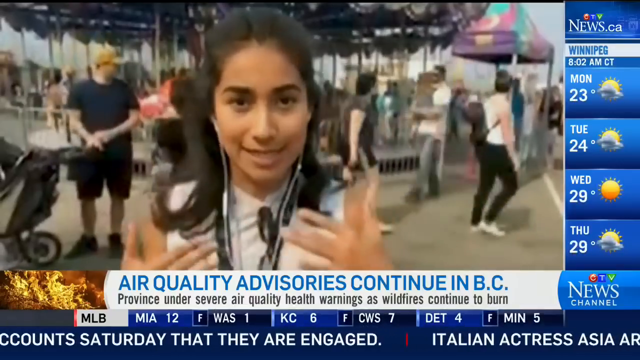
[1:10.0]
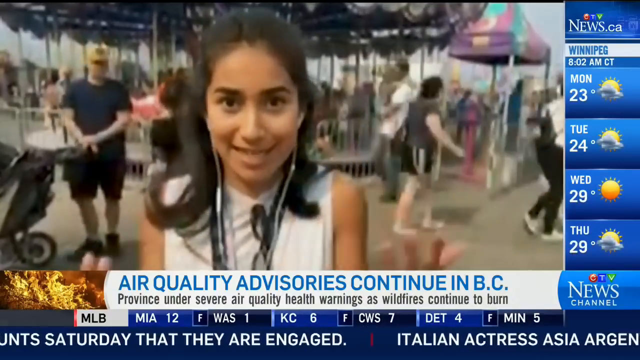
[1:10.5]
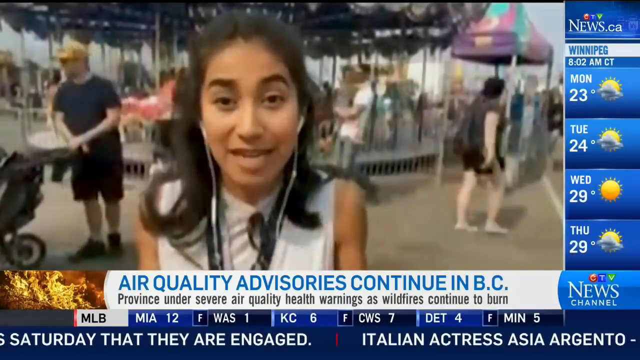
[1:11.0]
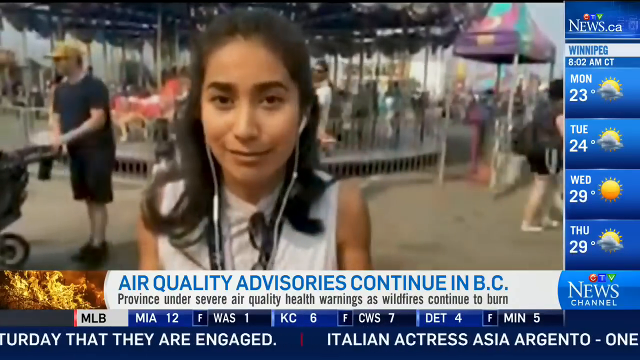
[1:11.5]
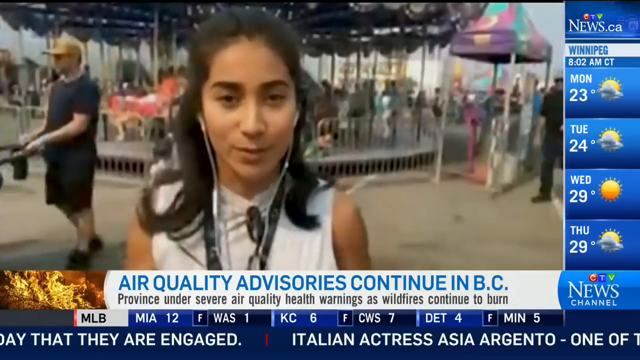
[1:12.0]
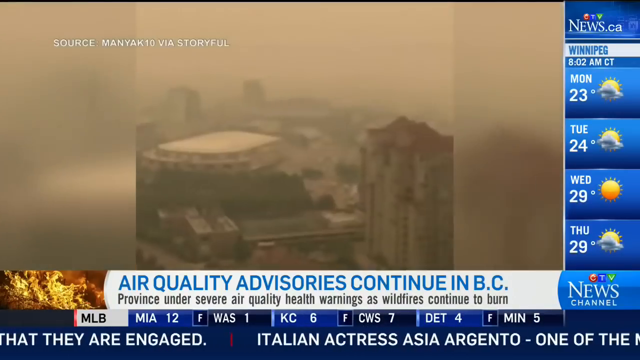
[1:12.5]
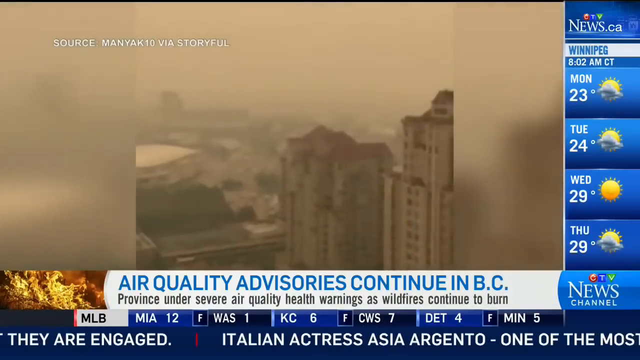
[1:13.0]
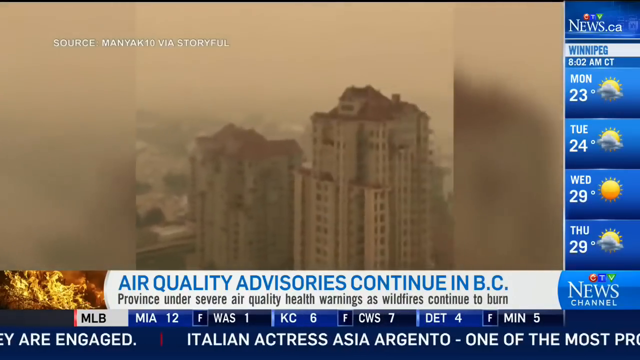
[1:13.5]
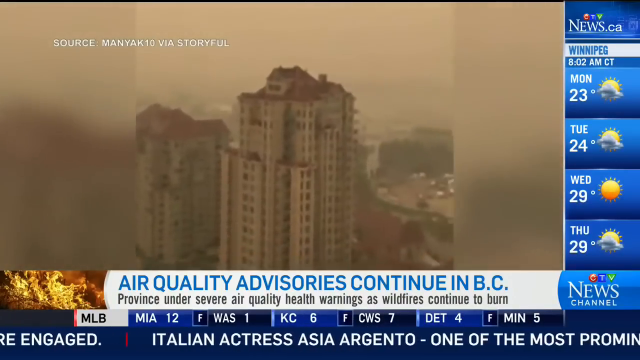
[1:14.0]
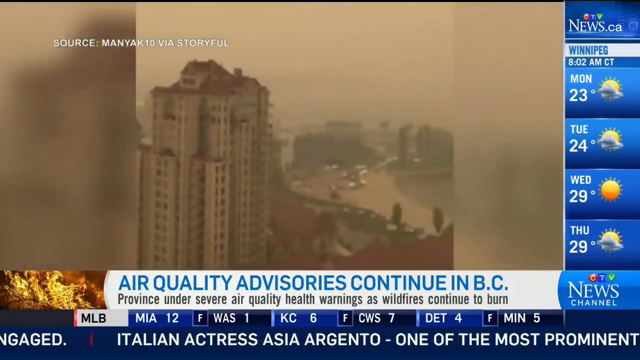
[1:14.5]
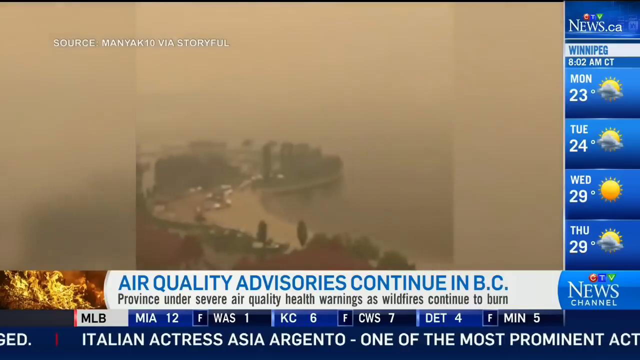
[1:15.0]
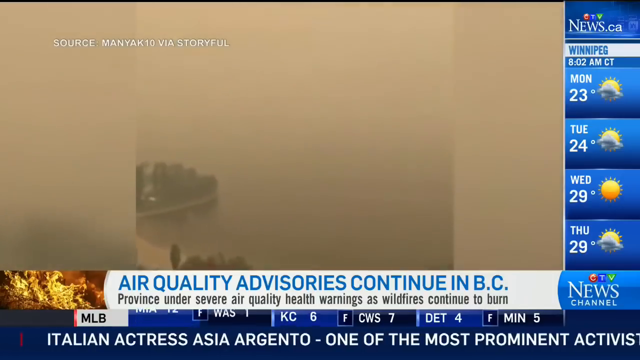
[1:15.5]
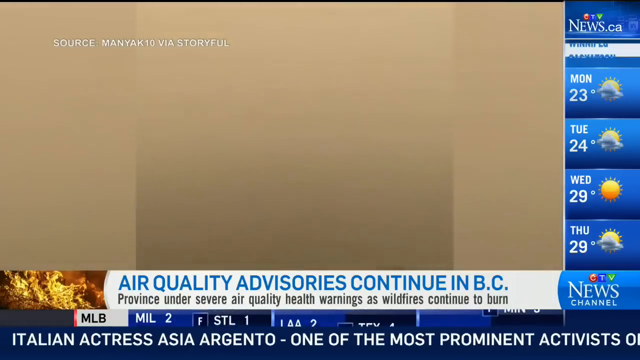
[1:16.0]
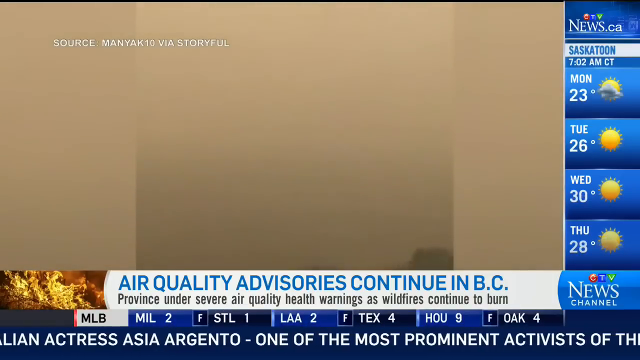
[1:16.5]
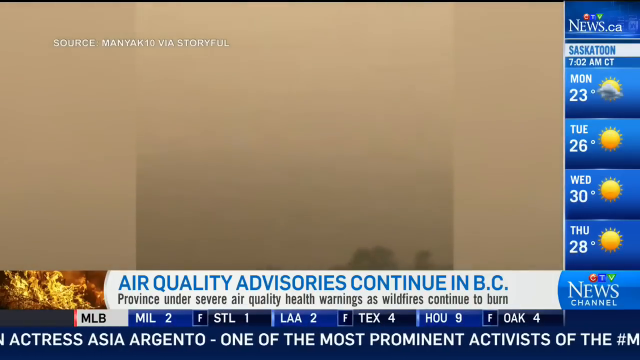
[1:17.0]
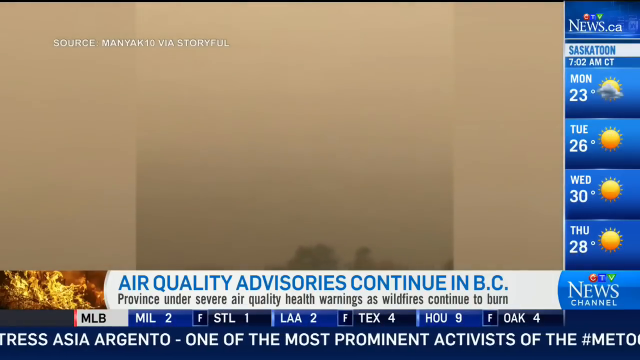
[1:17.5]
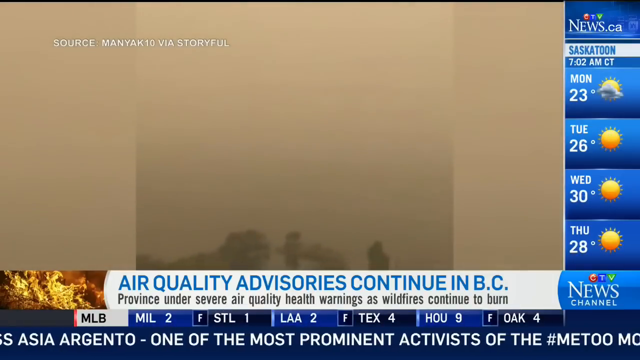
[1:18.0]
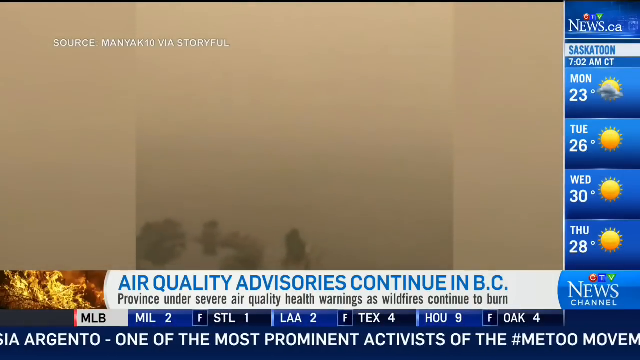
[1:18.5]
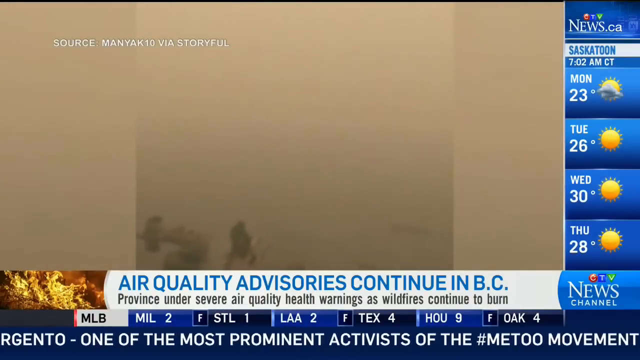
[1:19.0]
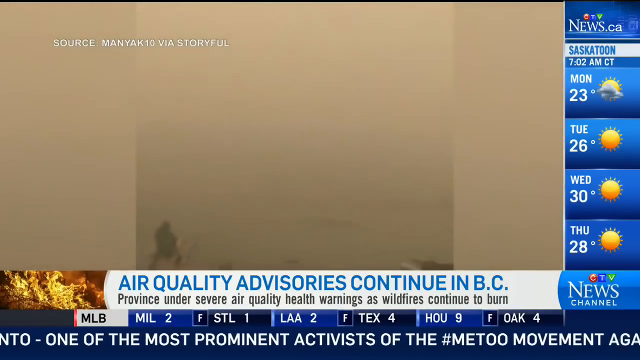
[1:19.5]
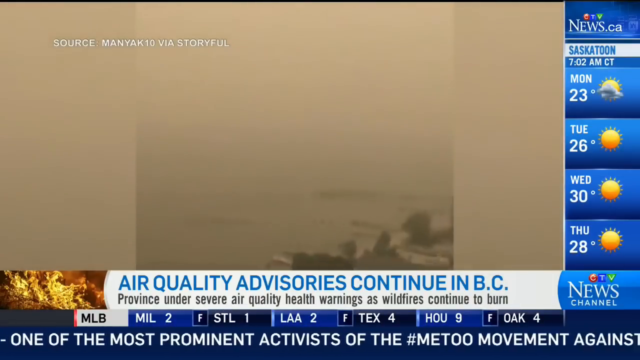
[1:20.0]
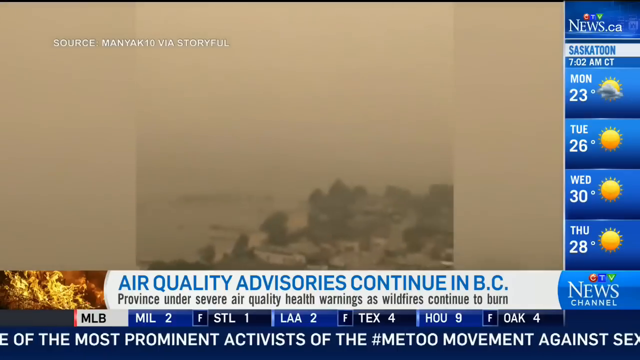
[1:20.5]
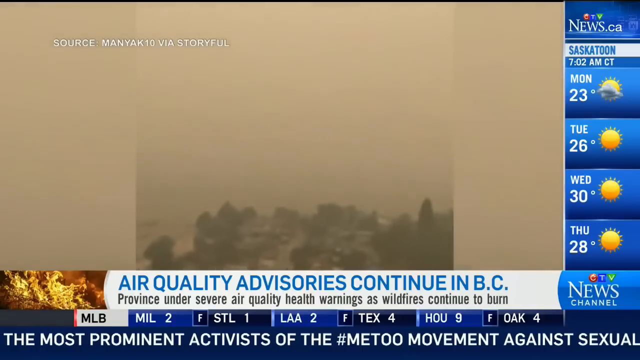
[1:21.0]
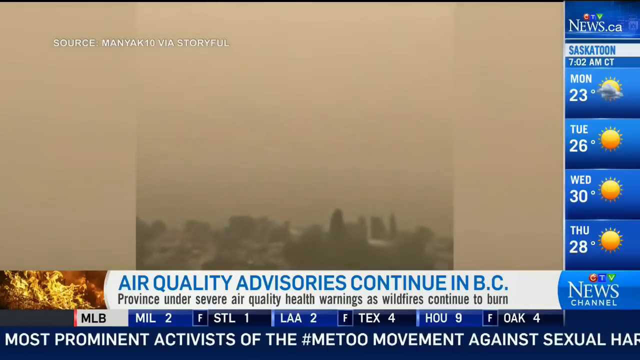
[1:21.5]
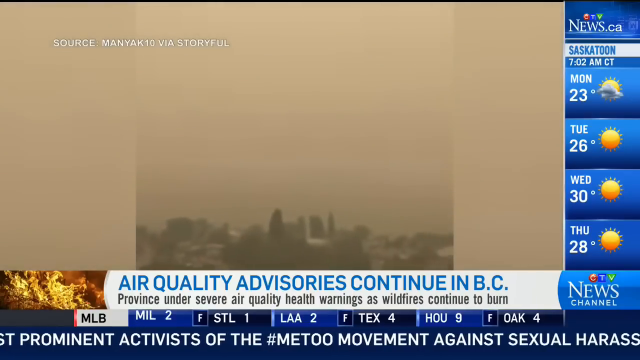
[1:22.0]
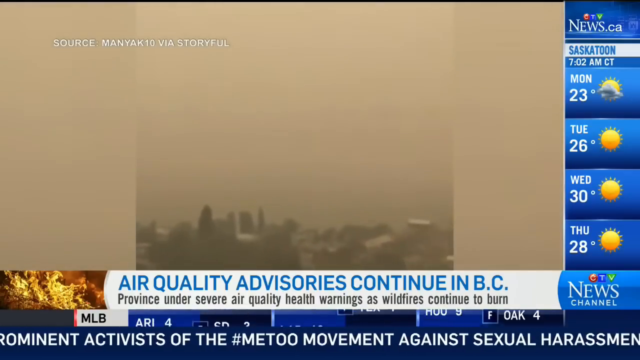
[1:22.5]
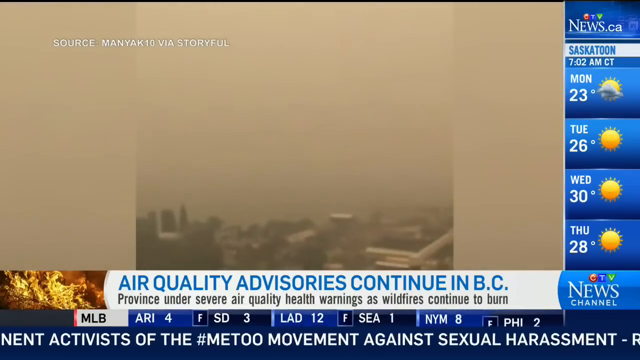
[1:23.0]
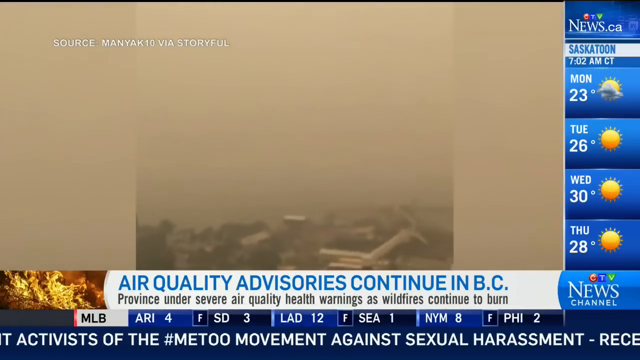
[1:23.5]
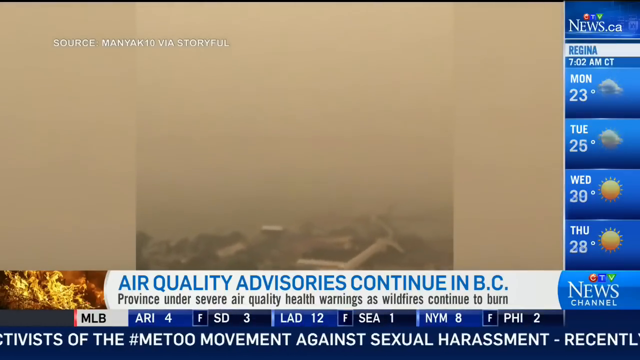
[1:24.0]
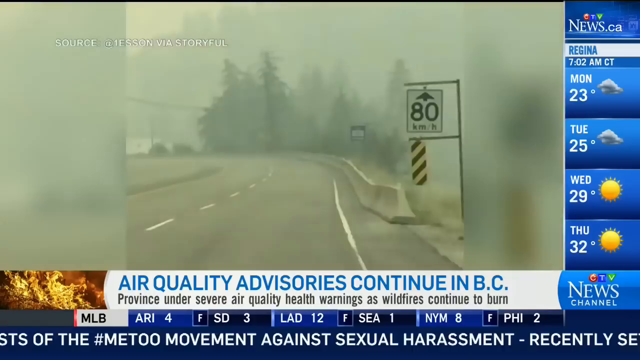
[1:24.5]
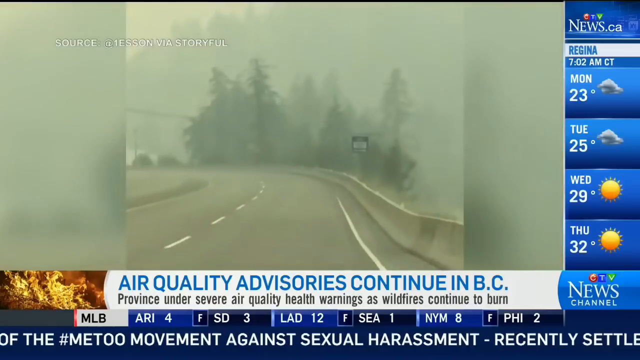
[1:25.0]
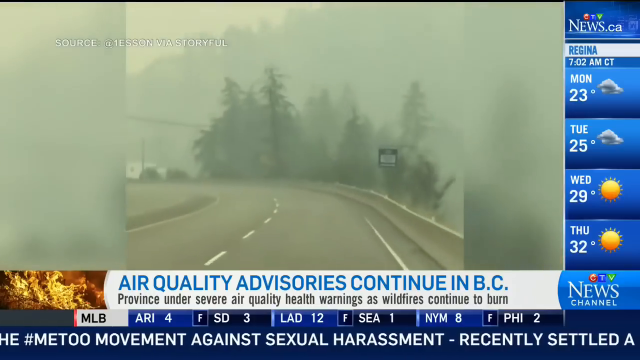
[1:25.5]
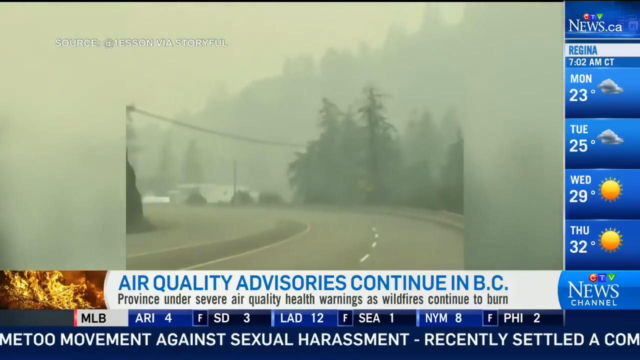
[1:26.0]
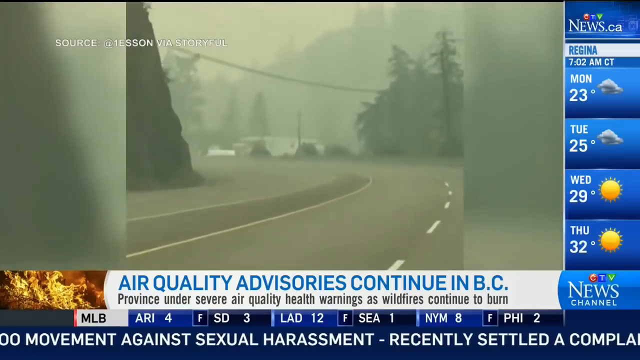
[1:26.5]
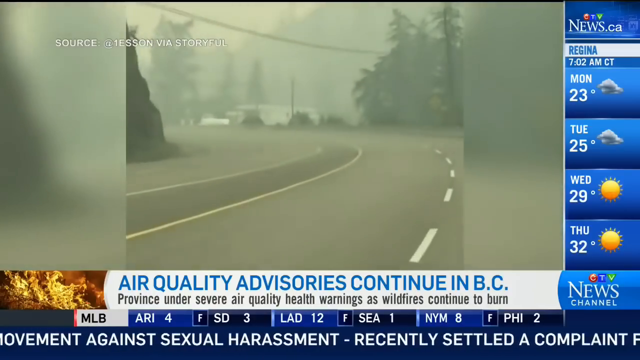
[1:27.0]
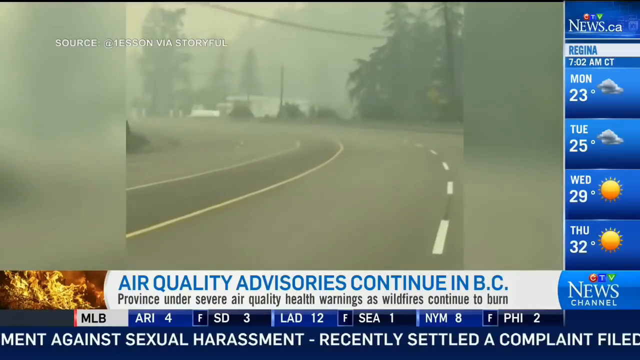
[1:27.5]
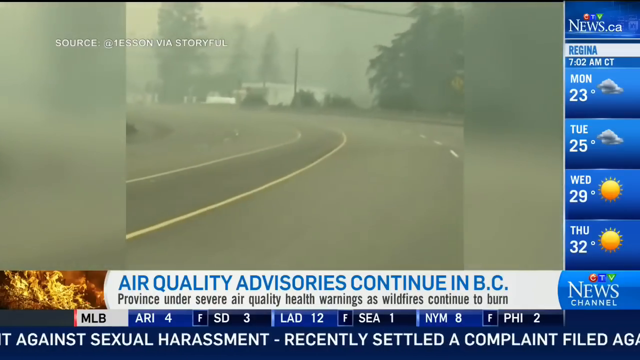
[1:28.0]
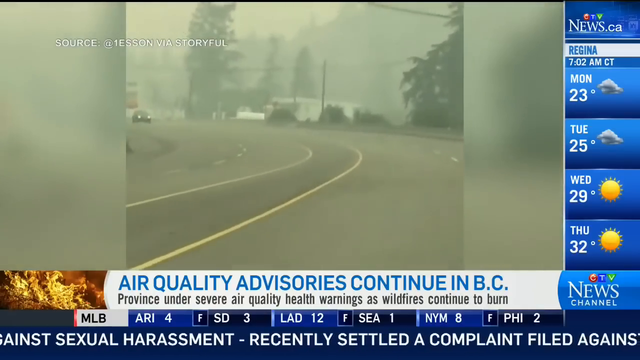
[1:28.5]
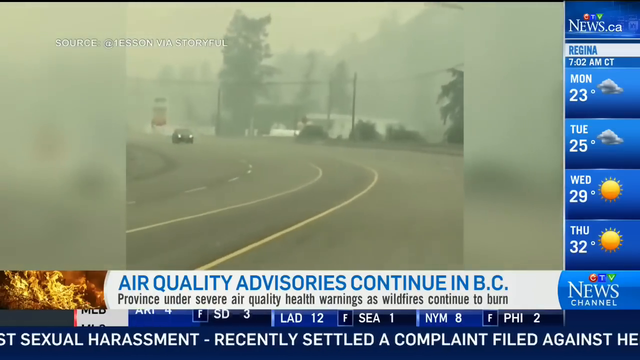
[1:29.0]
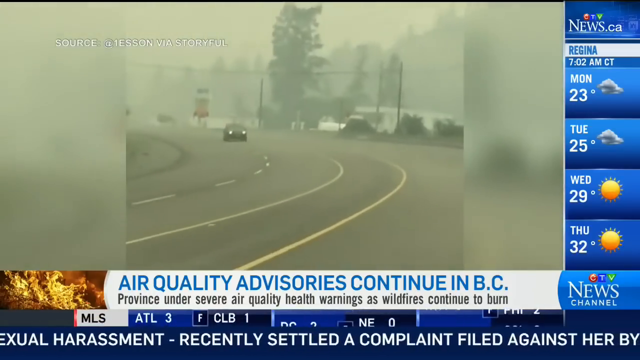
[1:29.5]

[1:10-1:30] The right side shows the weather in Winnipeg: Monday 22 degrees and partly sunny, Tuesday 24 degrees partly sunny, Wednesday 29 degrees and Thursday 29 degrees and partly sunny. The female in the white dress is still talking. A view of a city from above shows it covered in smoke, with parts of the buildings only slightly visible through it. A lake is also covered in smoke. On the top left is text reading "source Manyak10 via Storyful". The video pans around the city, showing smoke covering most of the place. Footage from a vehicle passing along a road shows the road covered in smoke as well.